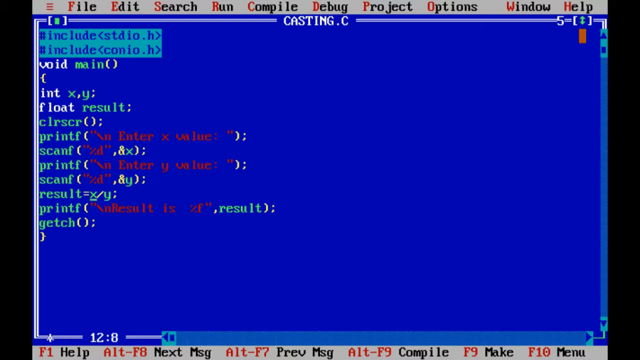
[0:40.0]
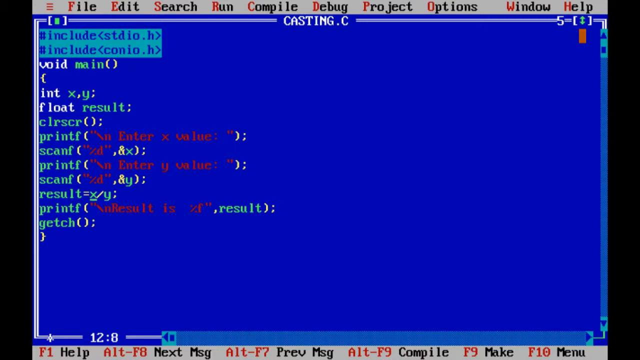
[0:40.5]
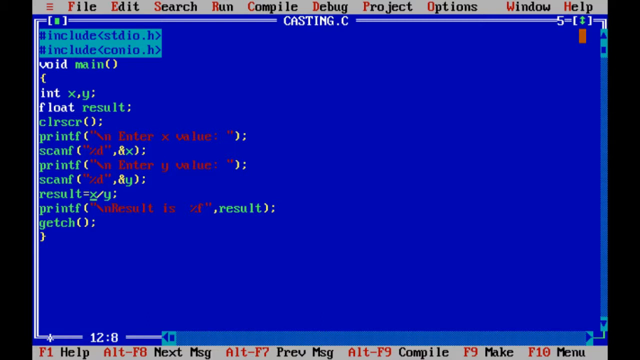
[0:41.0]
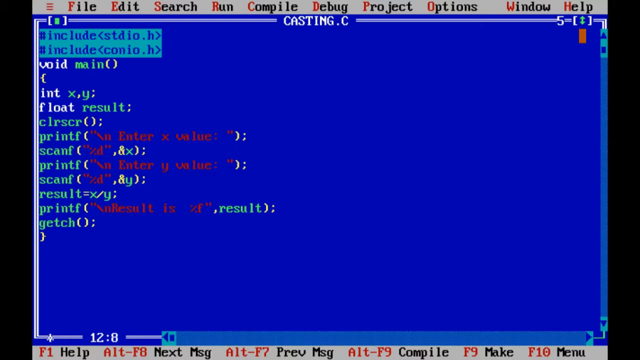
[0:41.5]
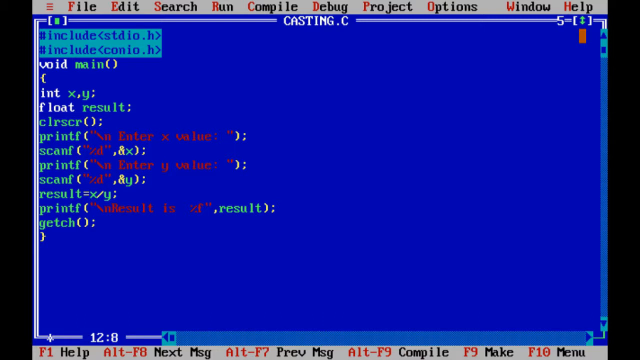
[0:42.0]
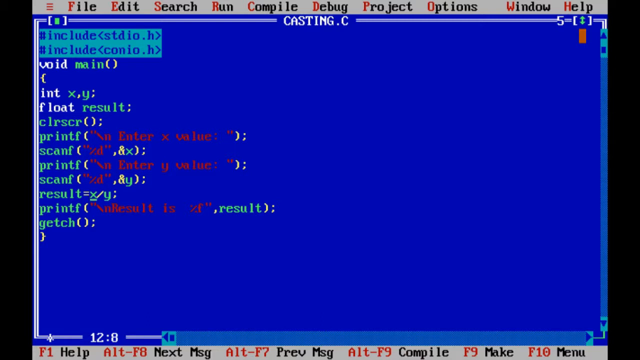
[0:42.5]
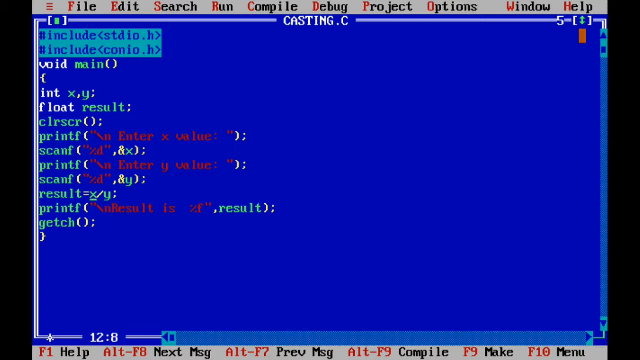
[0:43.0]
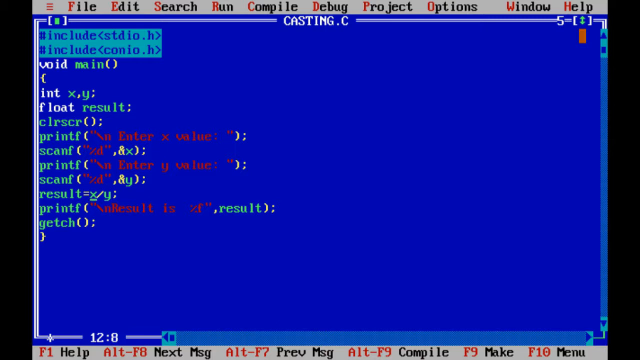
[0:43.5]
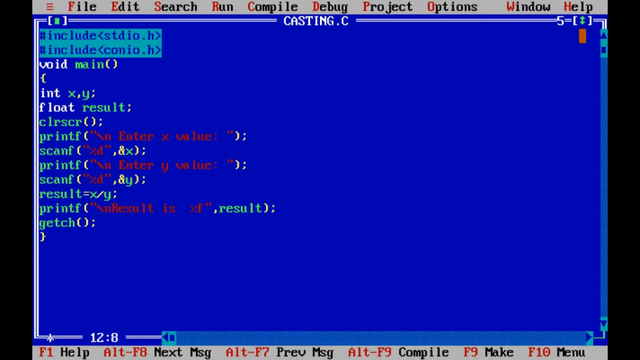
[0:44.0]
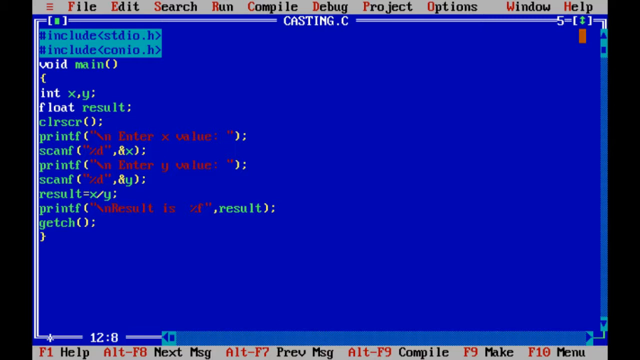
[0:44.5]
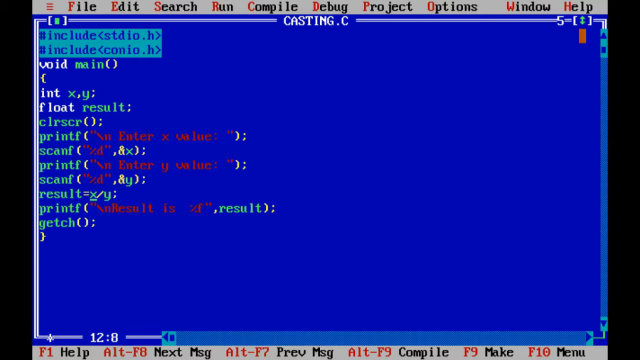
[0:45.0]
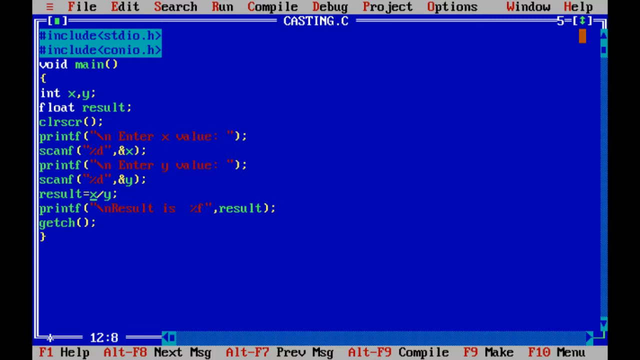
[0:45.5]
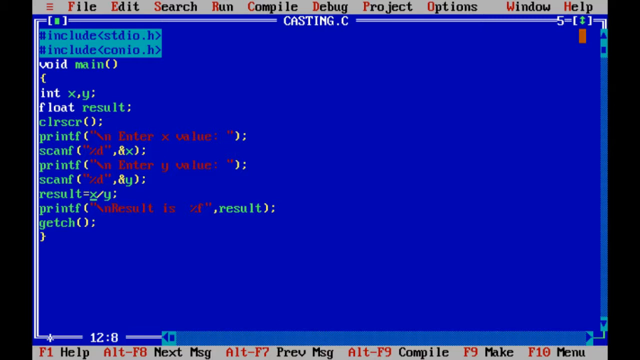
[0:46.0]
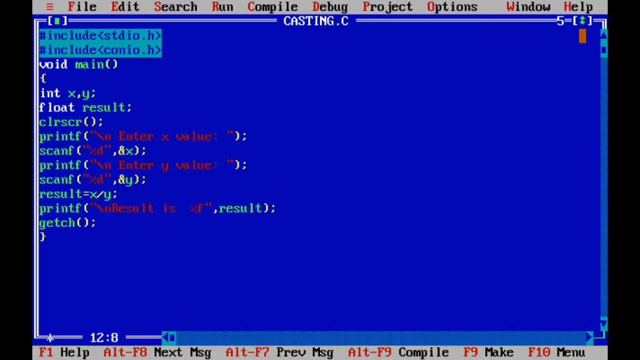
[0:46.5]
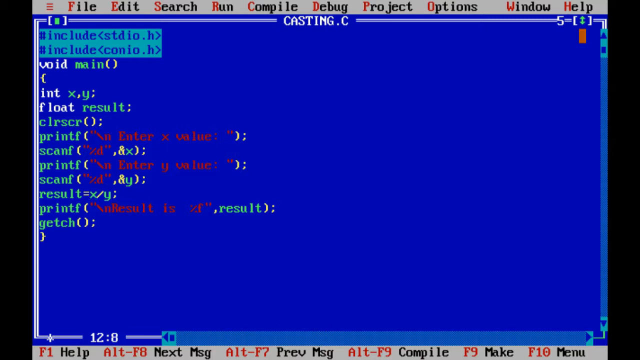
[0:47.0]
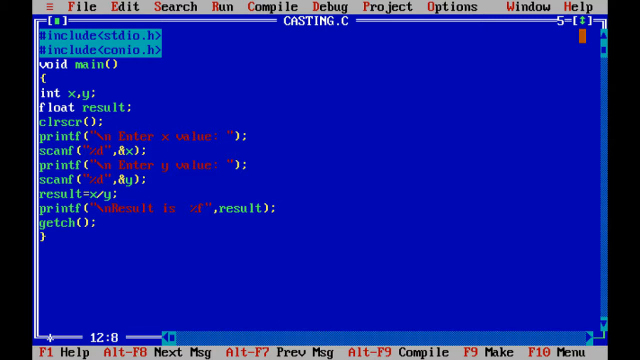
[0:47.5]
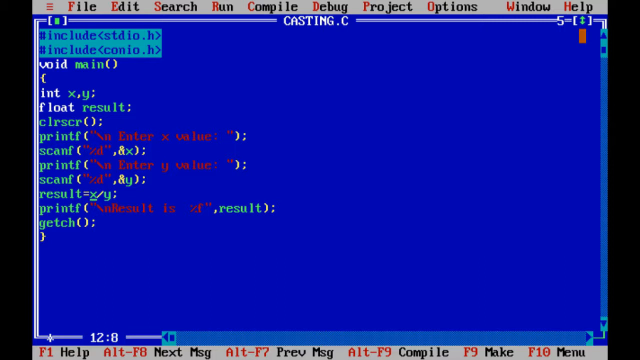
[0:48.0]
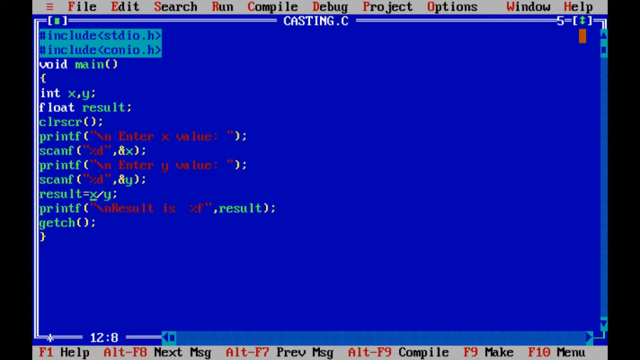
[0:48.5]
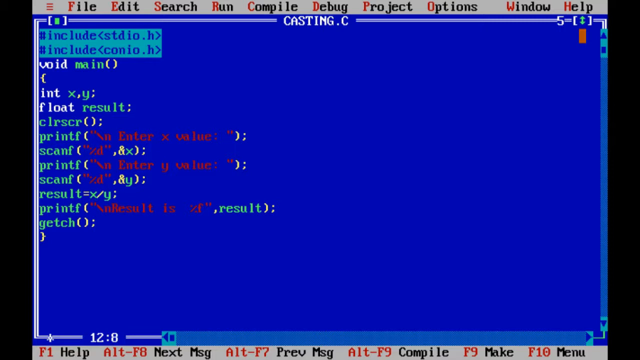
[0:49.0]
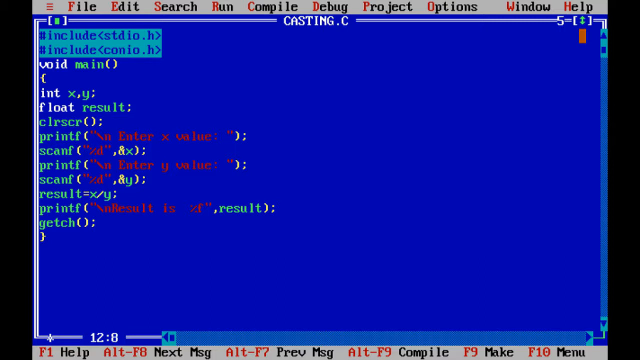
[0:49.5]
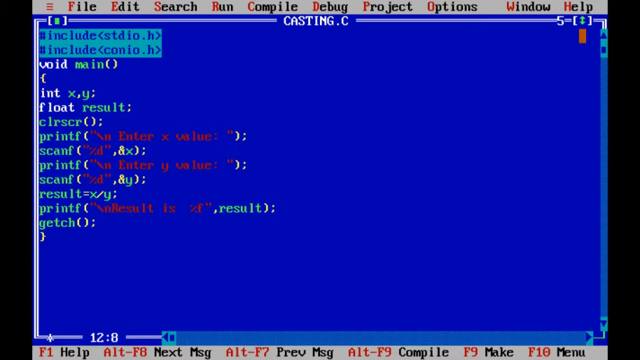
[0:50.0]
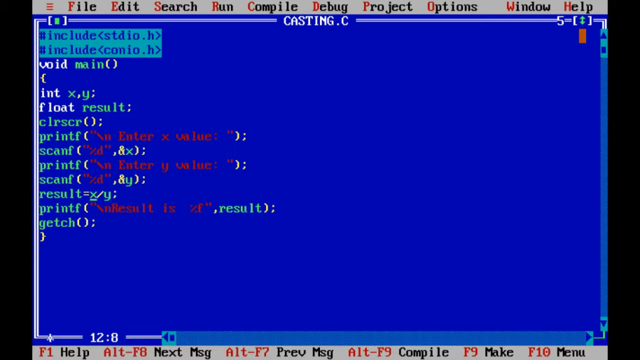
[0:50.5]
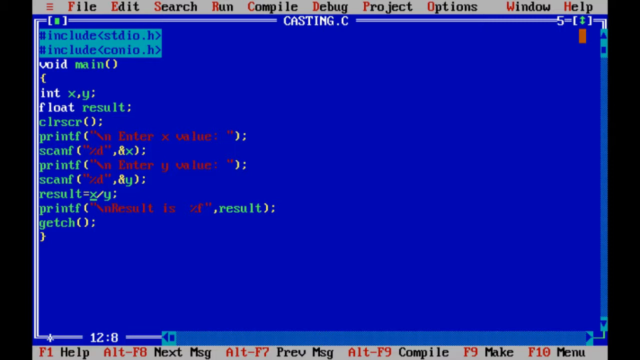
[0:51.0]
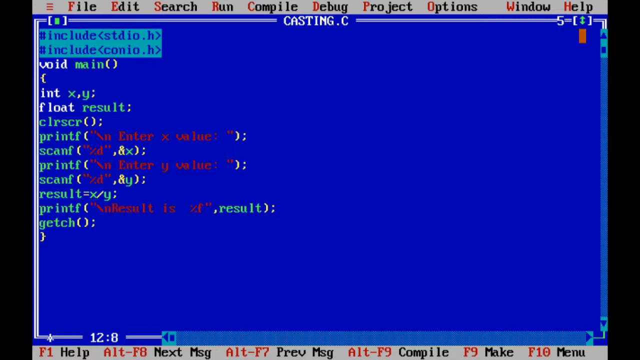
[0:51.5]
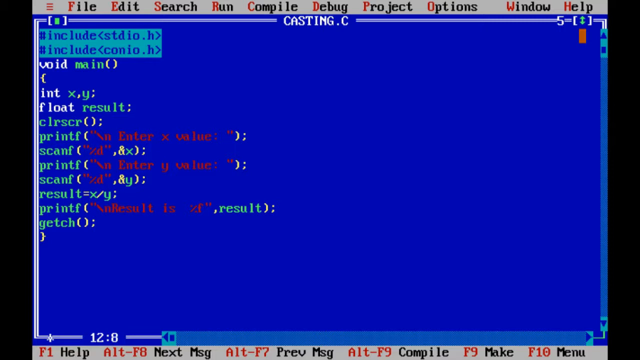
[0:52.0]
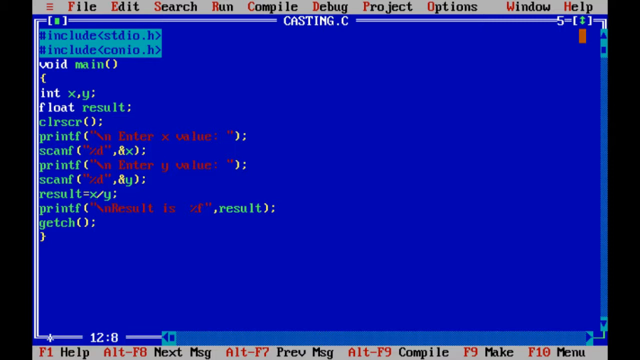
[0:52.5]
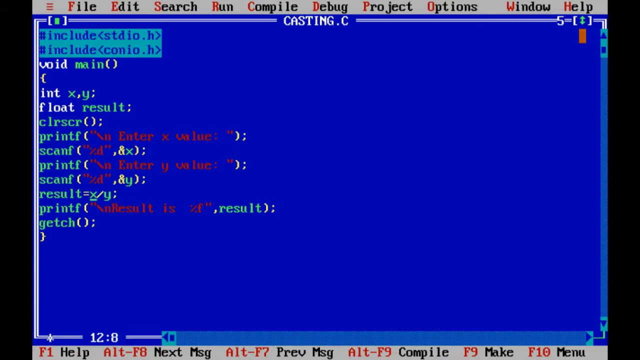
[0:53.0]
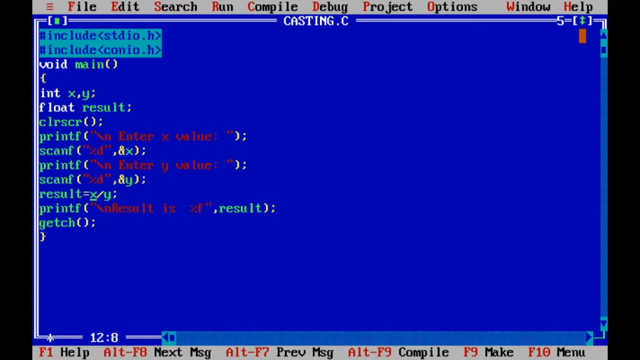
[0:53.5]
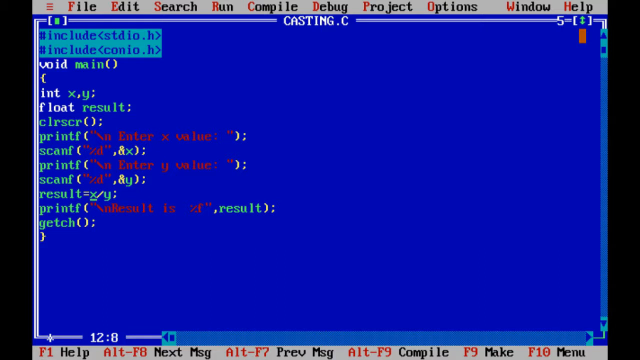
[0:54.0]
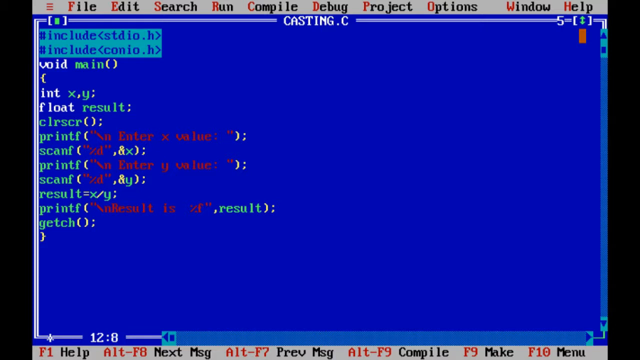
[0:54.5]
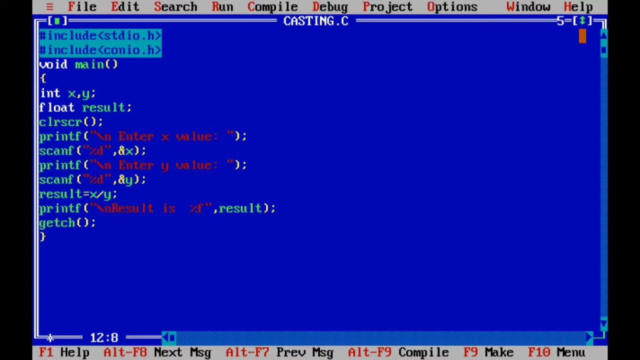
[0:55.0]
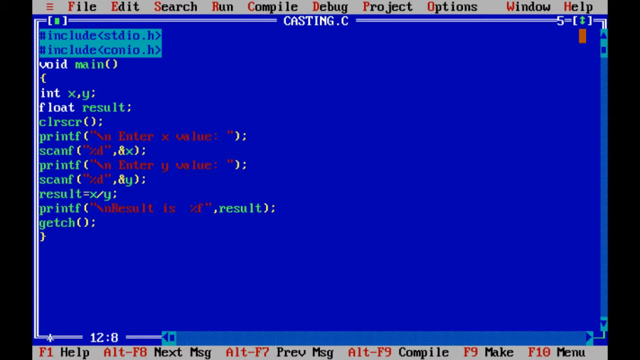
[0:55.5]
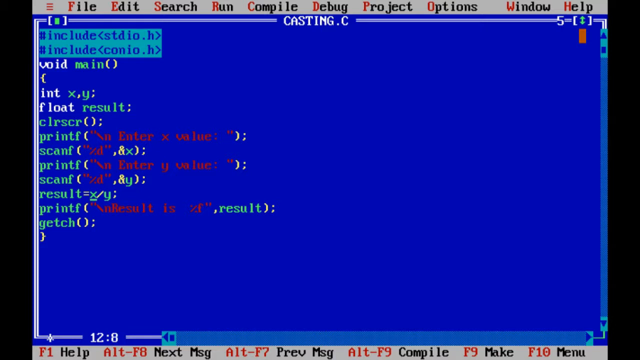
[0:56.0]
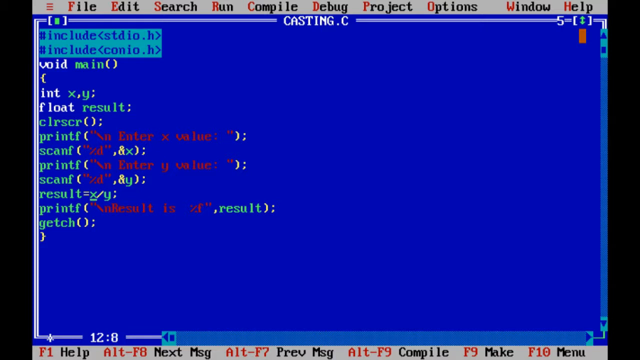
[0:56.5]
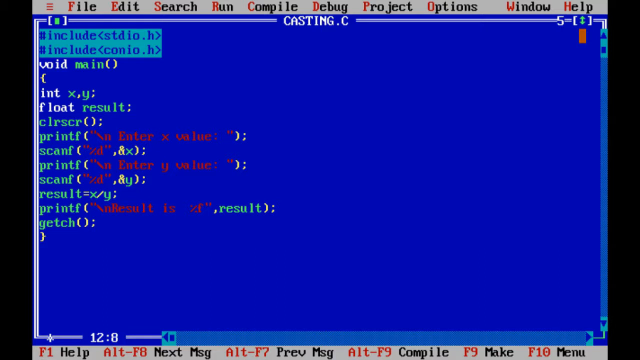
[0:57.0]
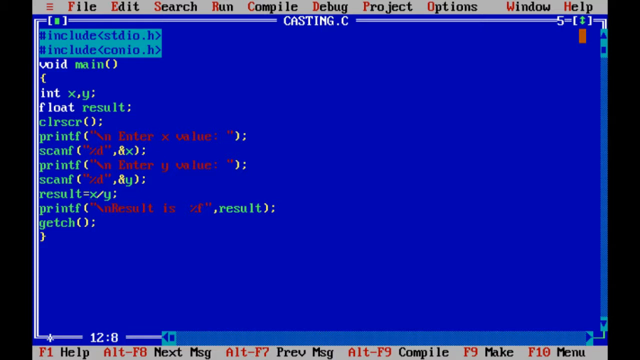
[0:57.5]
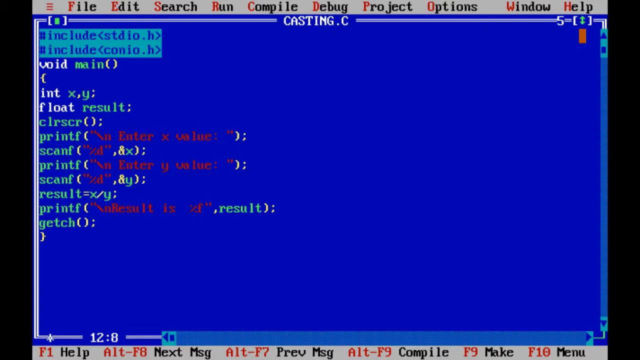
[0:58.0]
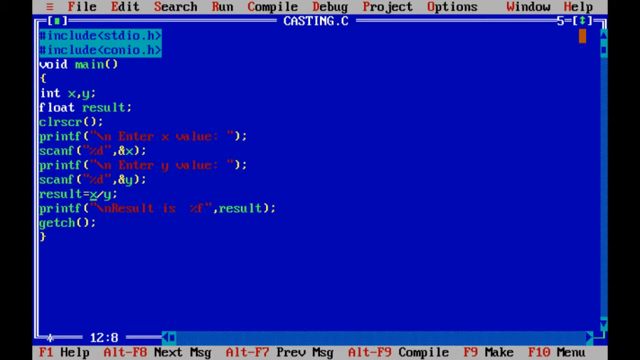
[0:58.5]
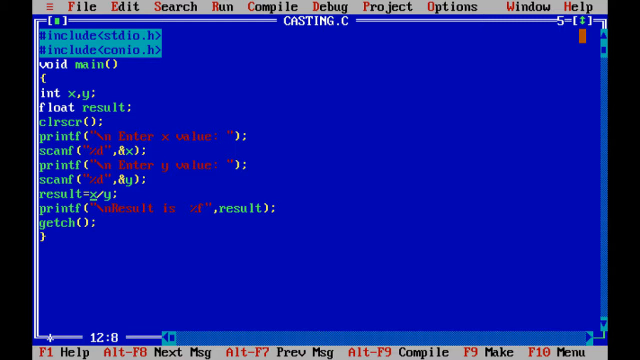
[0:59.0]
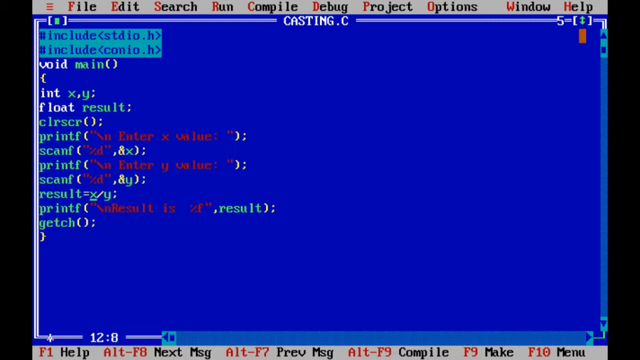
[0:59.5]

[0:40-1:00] The view of a computer screen appears static, showing an IDE window with code in a basic style of simple text and no images. The grey header has the options file, edit, search, run, compile, debug, project, options, window and help. The main body has a blue background with a white border around the outside, and a title reads "casting.c". There are about 13 lines of code. The only movement is on line 10, which reads "result = x / y", where a flashing underline cursor sits under the x. The screen has vertical and horizontal scroll bars. A shortcut help footer at the bottom, in grey, has six options: help, next message, previous message, compile, make and menu.